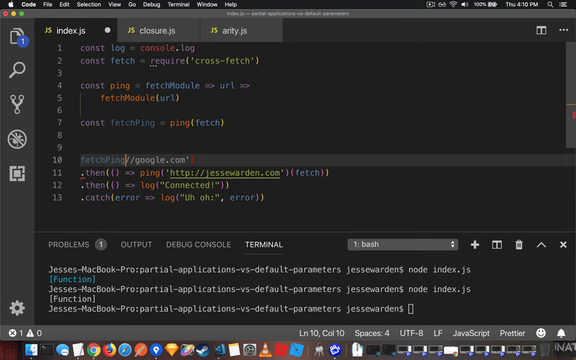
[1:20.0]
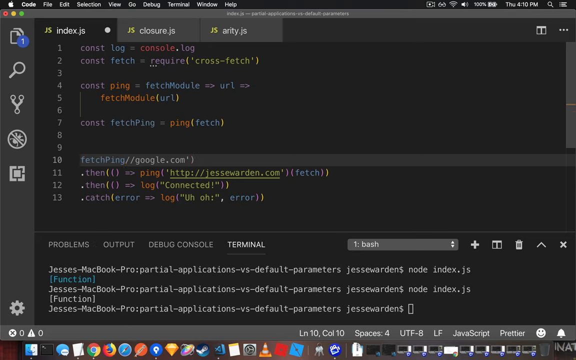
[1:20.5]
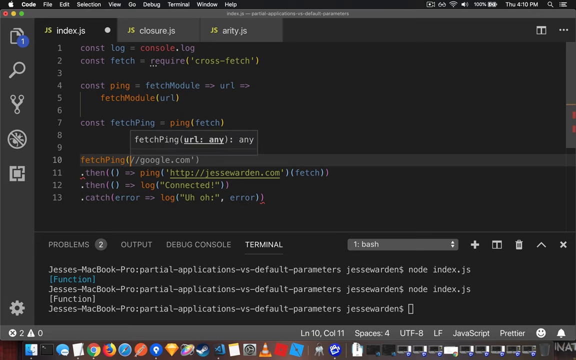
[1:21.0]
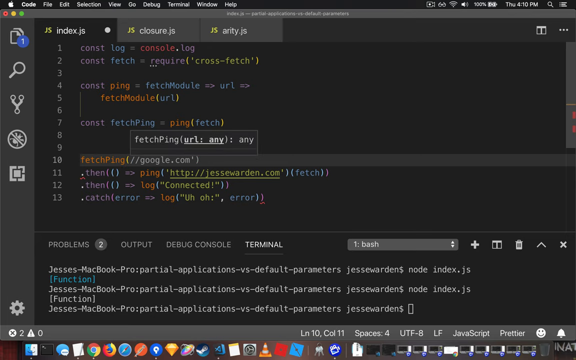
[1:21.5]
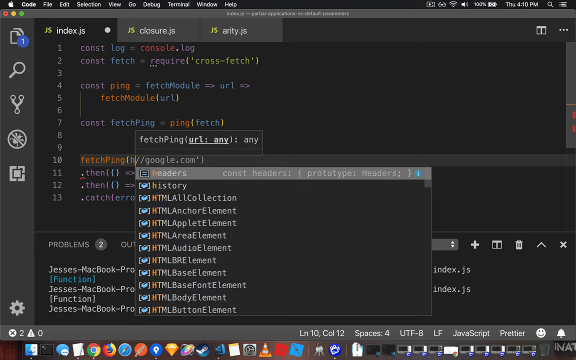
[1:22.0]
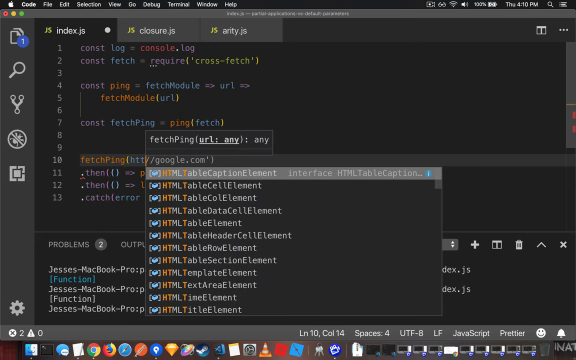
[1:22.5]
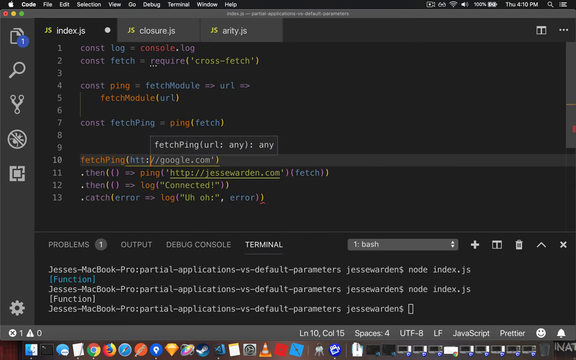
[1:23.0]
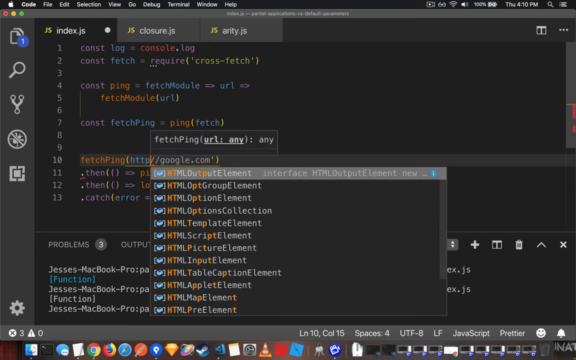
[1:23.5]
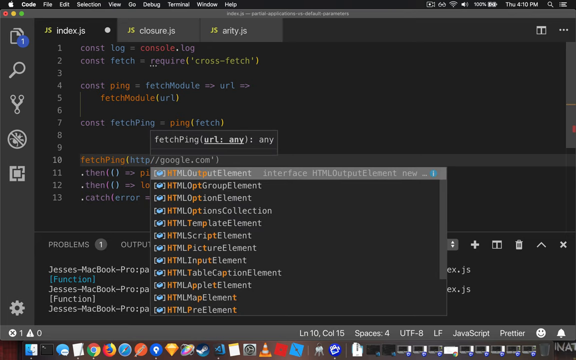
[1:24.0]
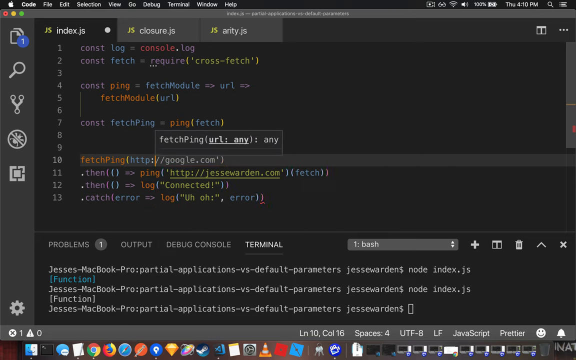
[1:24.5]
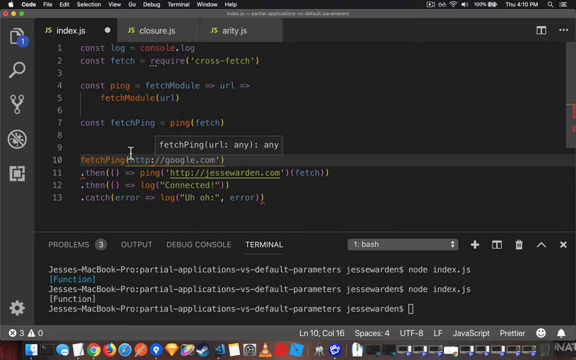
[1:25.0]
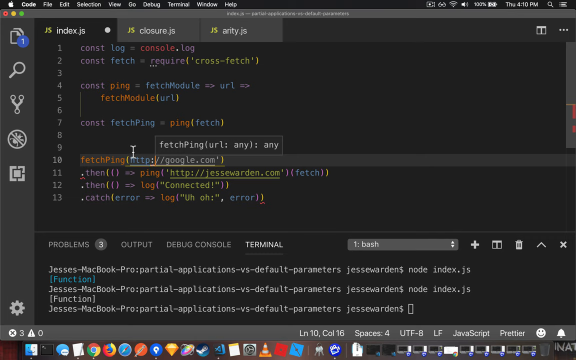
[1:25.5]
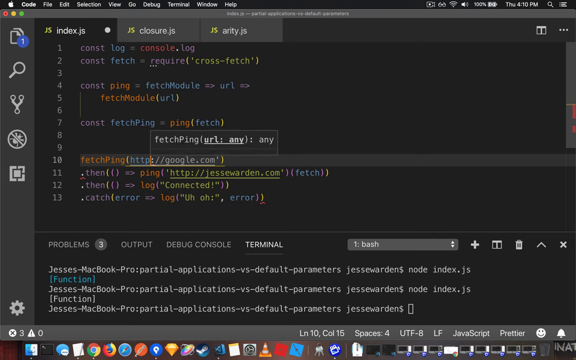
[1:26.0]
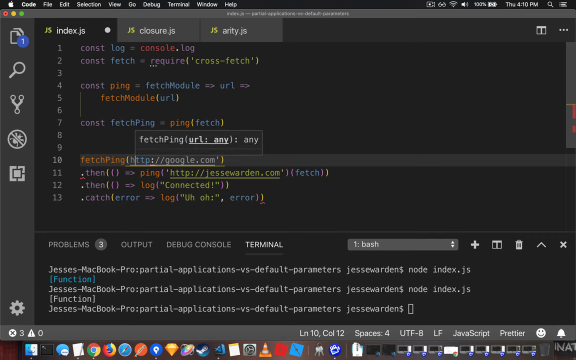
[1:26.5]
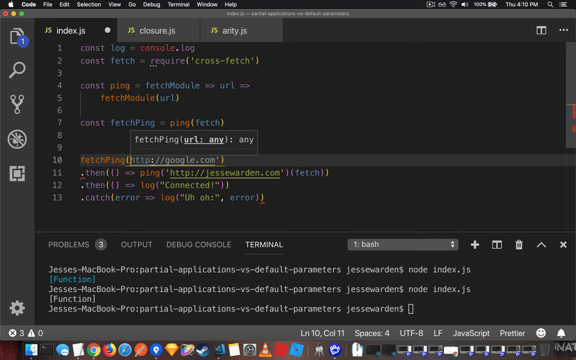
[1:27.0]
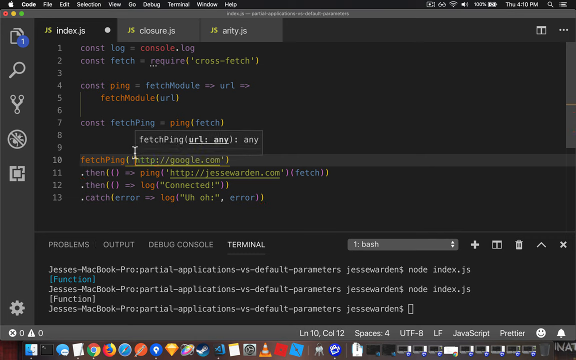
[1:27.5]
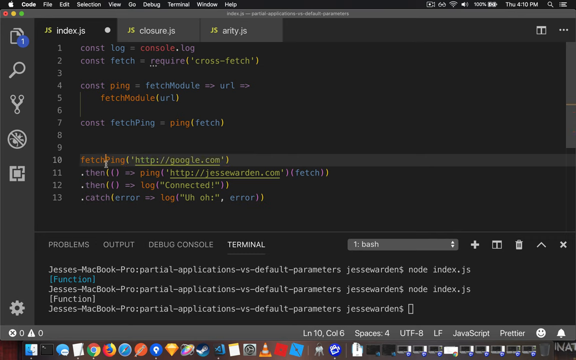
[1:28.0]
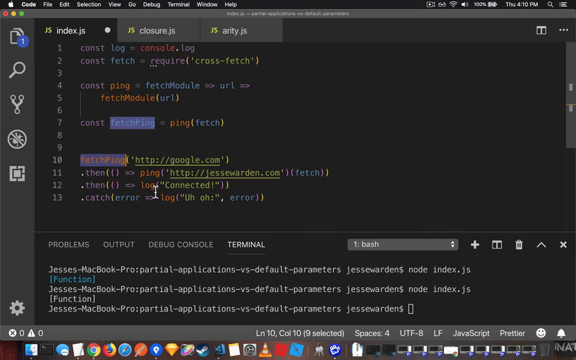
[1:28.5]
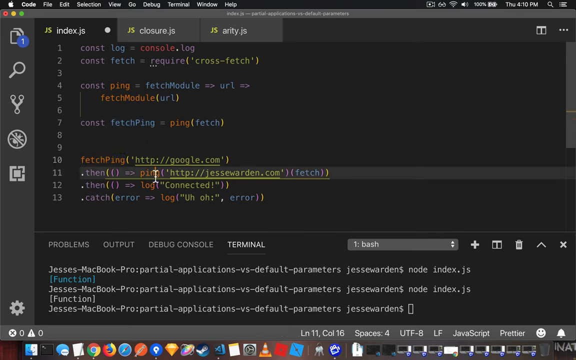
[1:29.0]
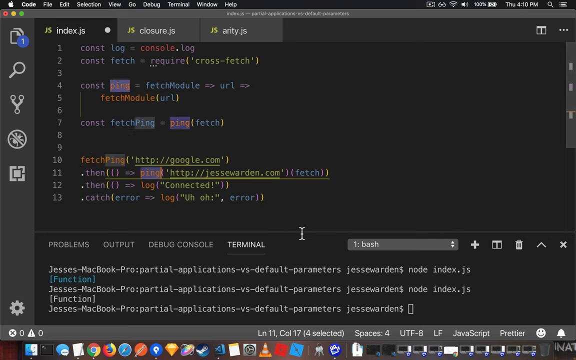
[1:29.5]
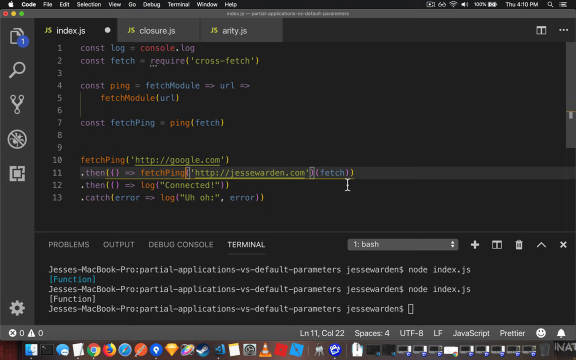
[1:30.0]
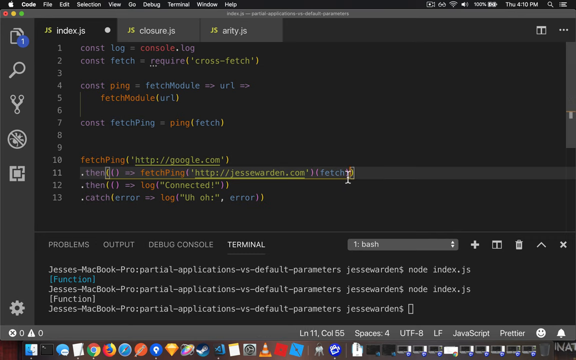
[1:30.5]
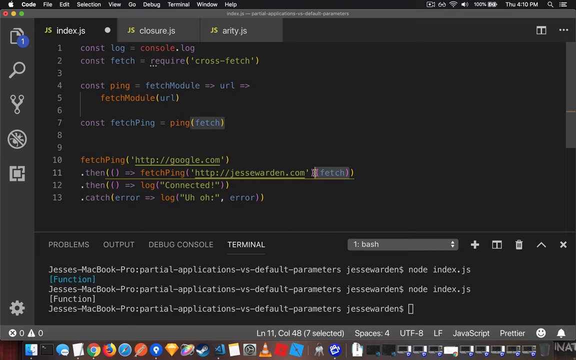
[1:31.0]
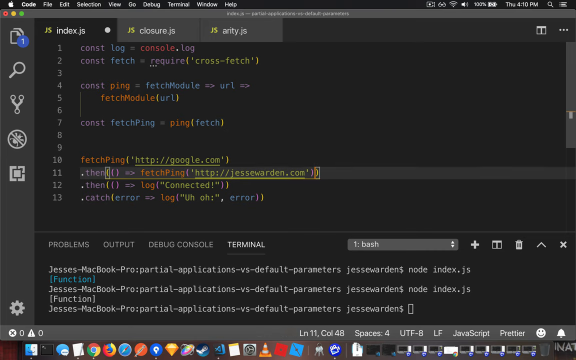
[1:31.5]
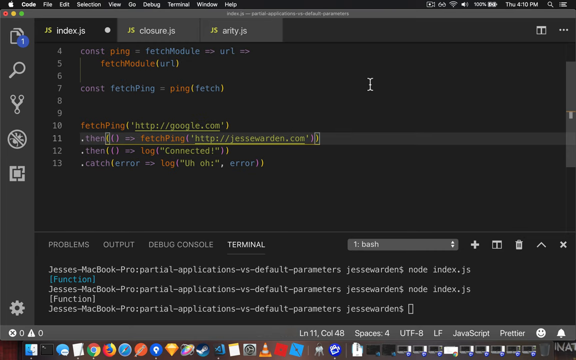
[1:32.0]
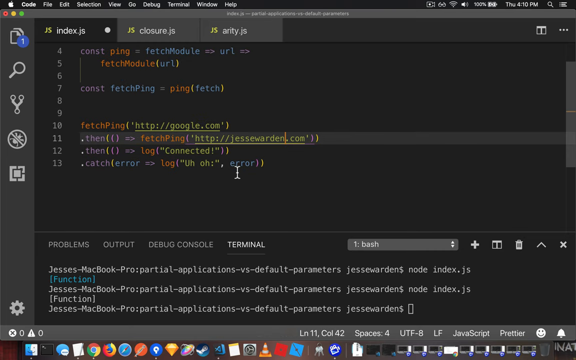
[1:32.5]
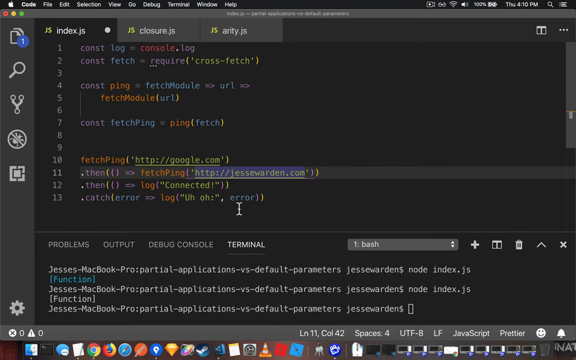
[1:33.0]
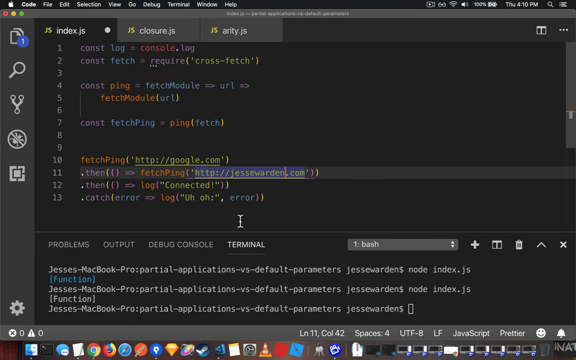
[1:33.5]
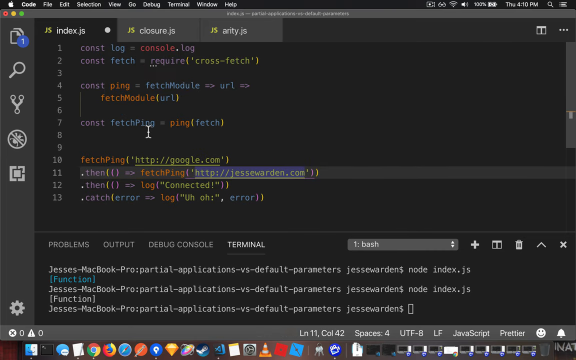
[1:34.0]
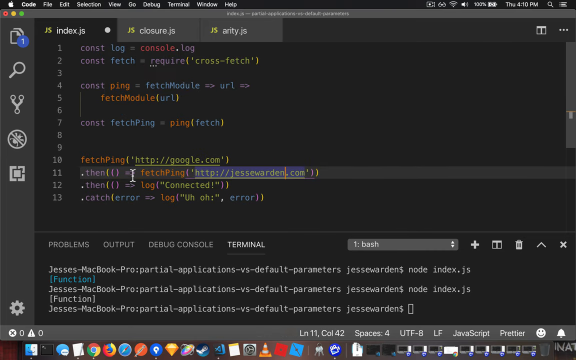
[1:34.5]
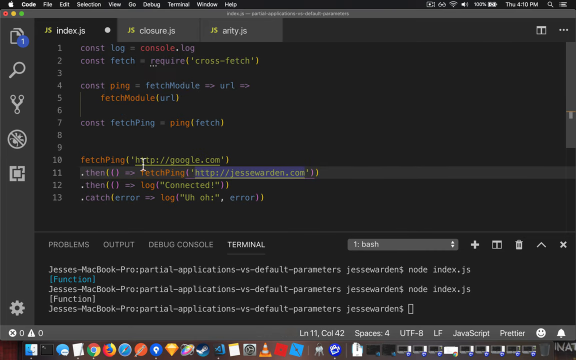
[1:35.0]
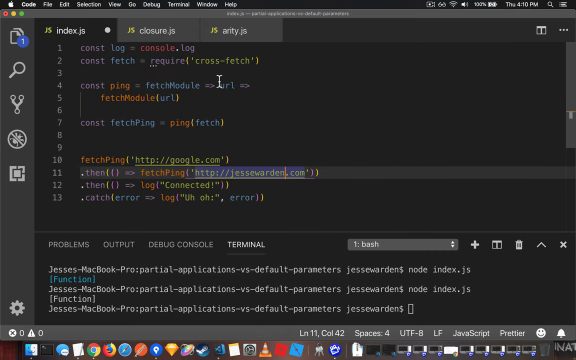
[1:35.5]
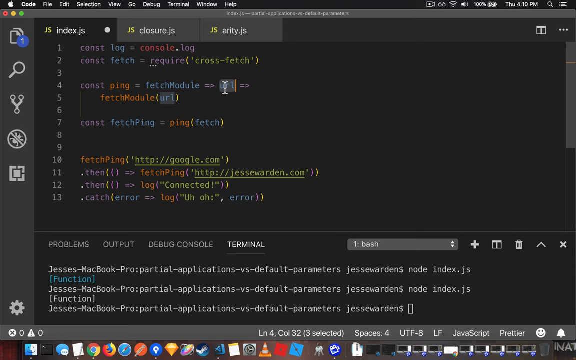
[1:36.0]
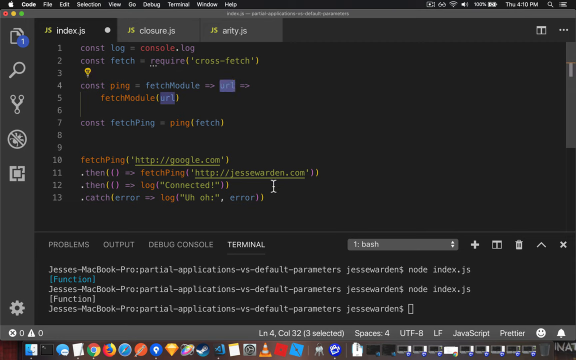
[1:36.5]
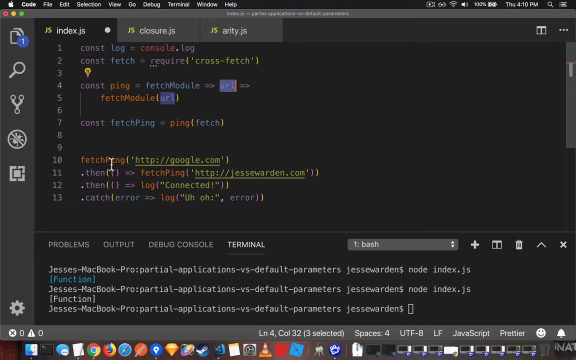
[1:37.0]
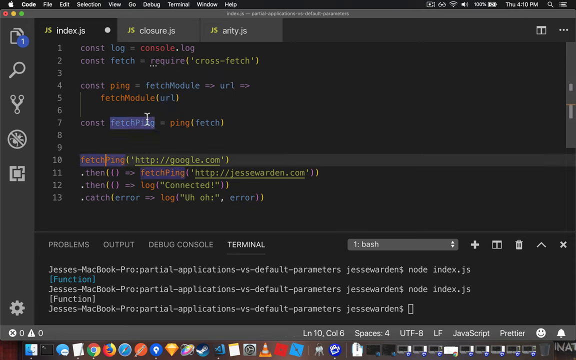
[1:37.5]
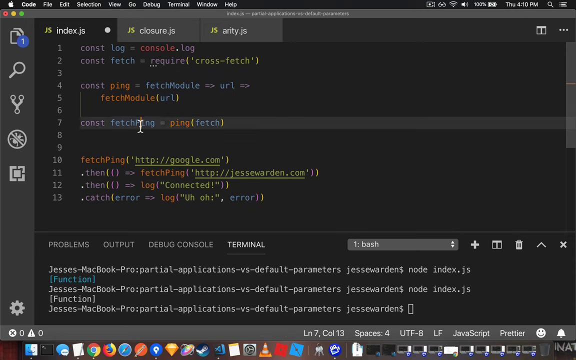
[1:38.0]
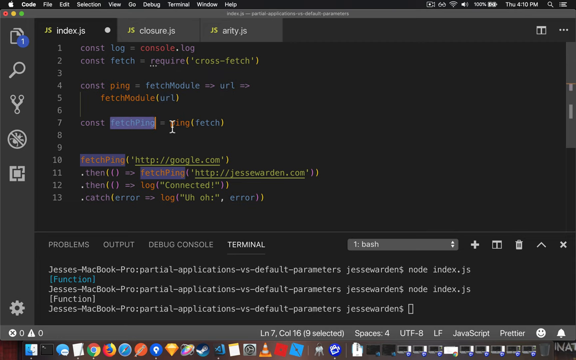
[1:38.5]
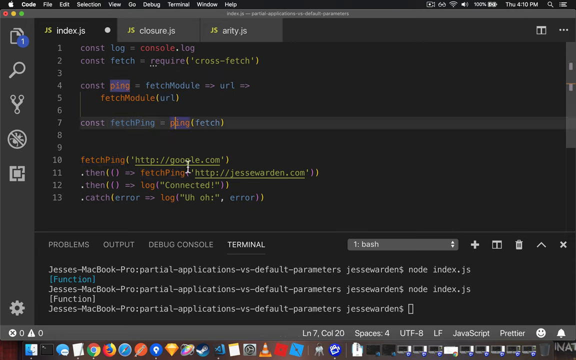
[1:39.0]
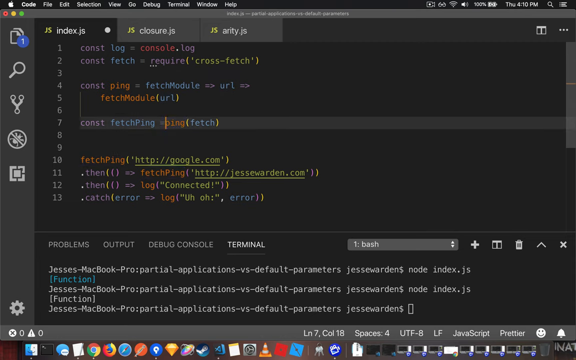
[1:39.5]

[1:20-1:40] A bunch of code, apparently JavaScript, appears on a gray background on an Apple platform, with the navigation bar at the top. White numbers on the left show 13 lines of code, written in purple, blue, red, orange or yellow text. From top to bottom it reads "const log equals console.log, const fetch equals require cross-fetch, const ping equals fetch module equals URL, fetch module URL, const fetch ping equals ping fetch, fetch ping google.com, then ping jessewarden.com, it fetched, then log connected, catch error log, uh-oh, error." Line 10, reading "fetch ping," apparently has a text input cursor on it and reads "fetch ping google.com"; "HTTP colon" is added before google.com, completing the URL so it reads "fetch ping HTTP google.com." The fetch in front of jessewarden.com is double-clicked and replaced with fetch ping, and the fetch at the end of jessewarden.com is deleted. URL is double-clicked, highlighting all the other instances of URL, and fetch ping is double-clicked, highlighting all the other fetch pings. On the seventh line, "const fetch ping equals ping fetch," the cursor is placed right before "ping fetch," and enter appears to be pressed, creating a new line so that it moves to line number eight.